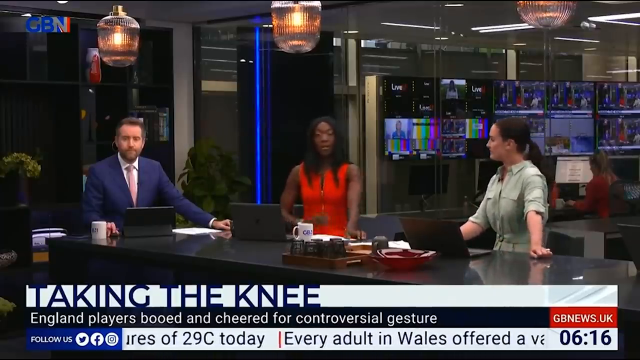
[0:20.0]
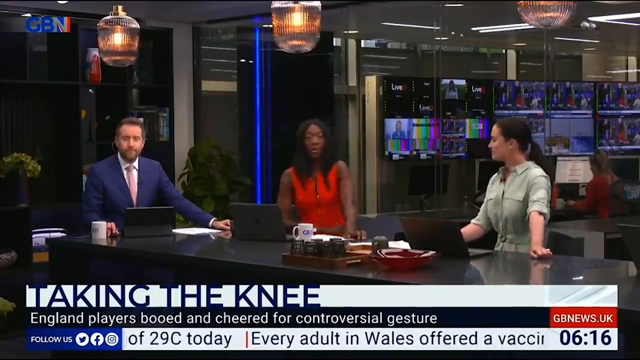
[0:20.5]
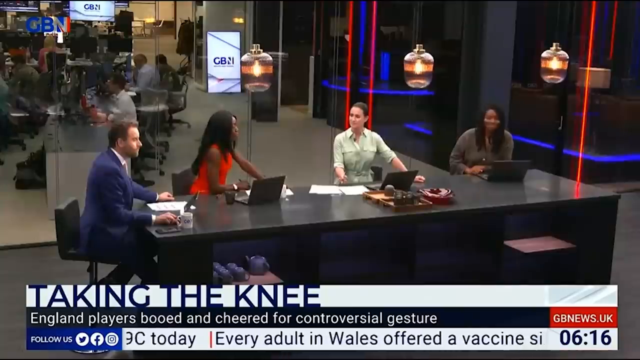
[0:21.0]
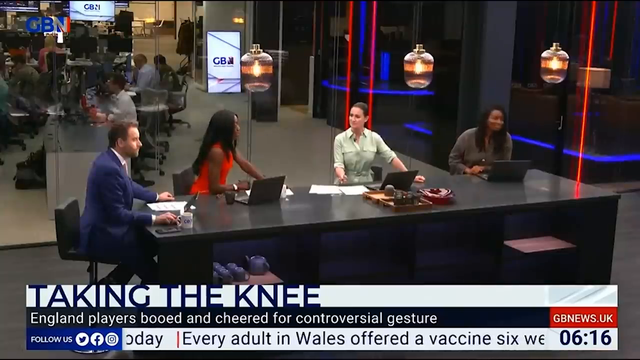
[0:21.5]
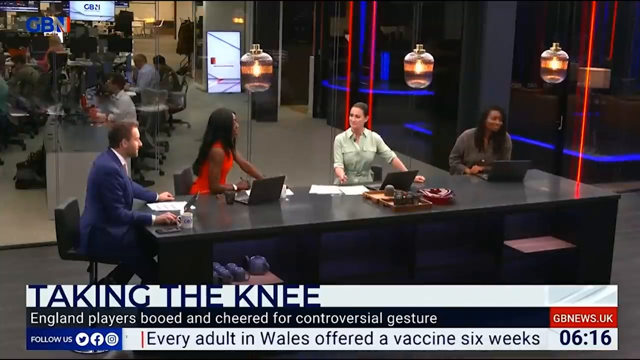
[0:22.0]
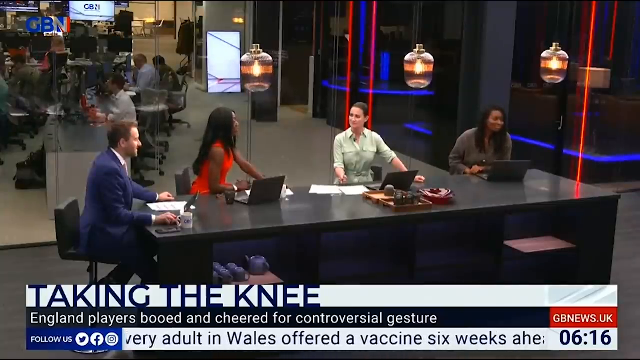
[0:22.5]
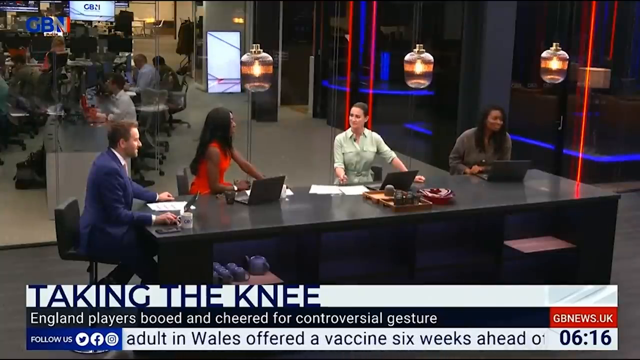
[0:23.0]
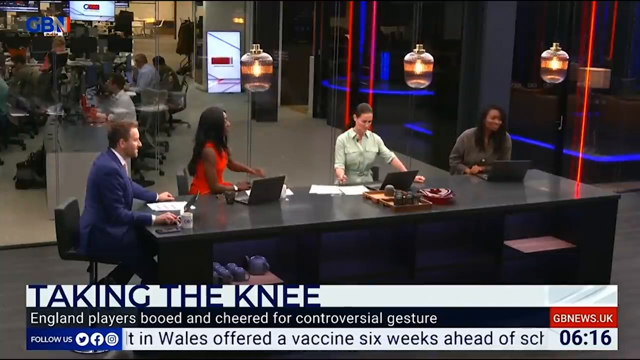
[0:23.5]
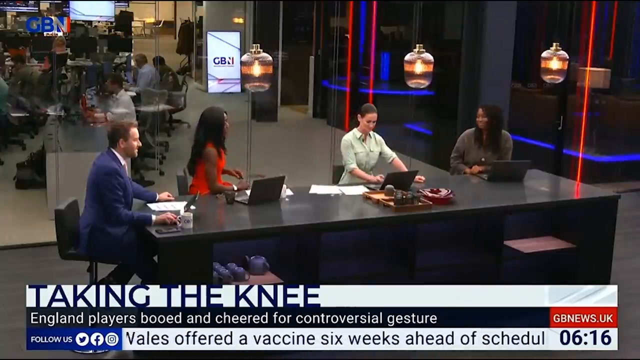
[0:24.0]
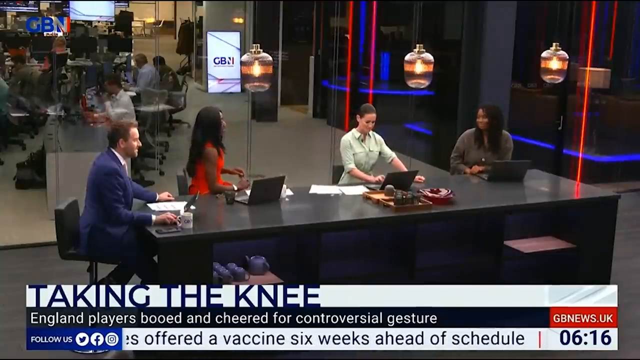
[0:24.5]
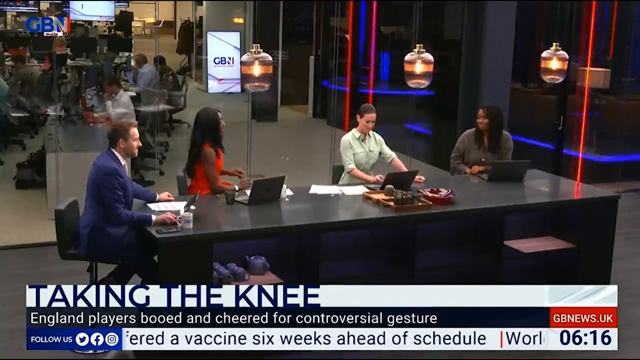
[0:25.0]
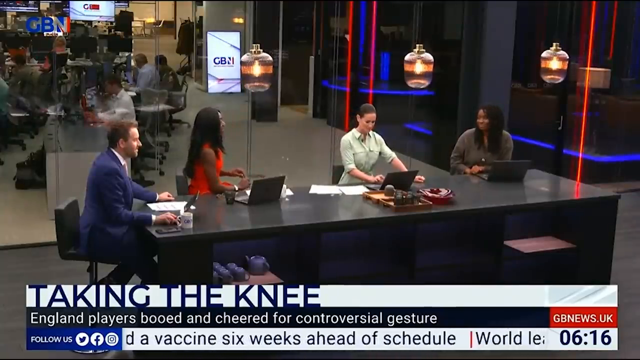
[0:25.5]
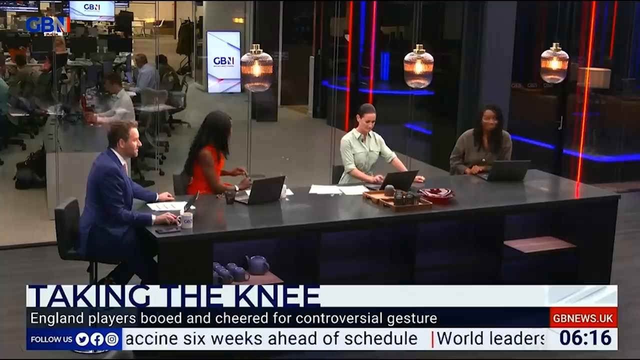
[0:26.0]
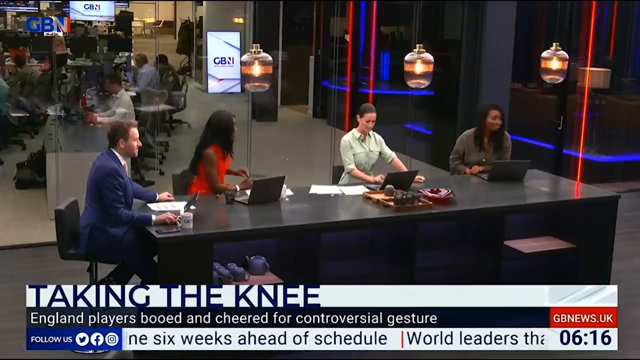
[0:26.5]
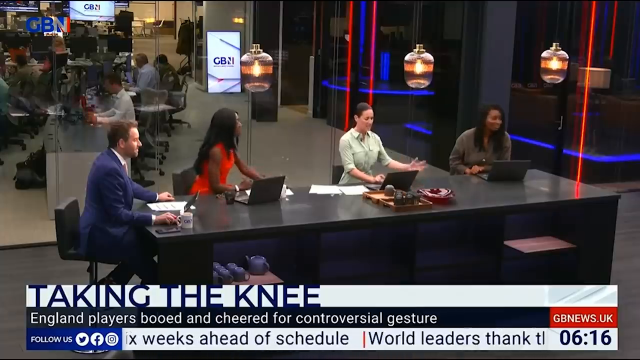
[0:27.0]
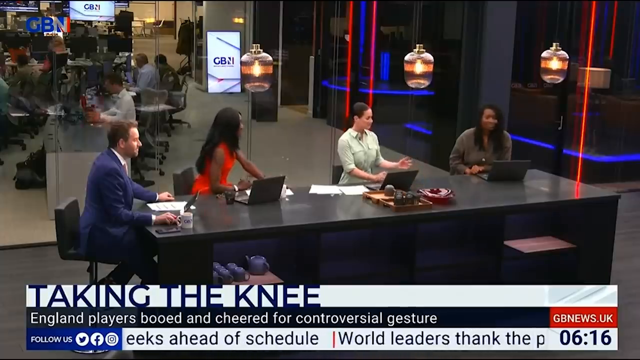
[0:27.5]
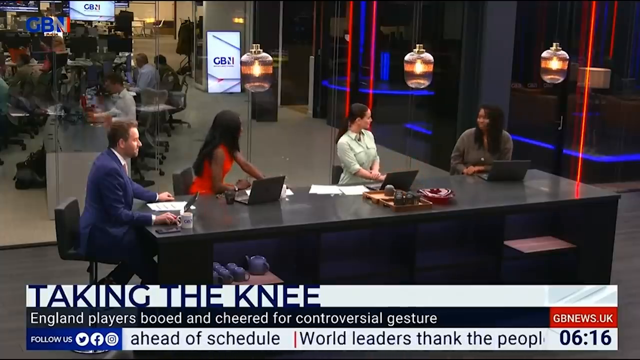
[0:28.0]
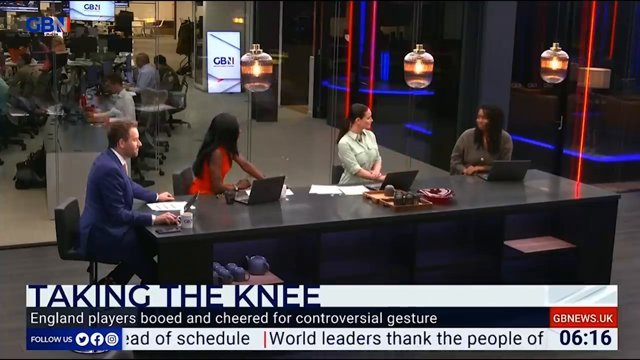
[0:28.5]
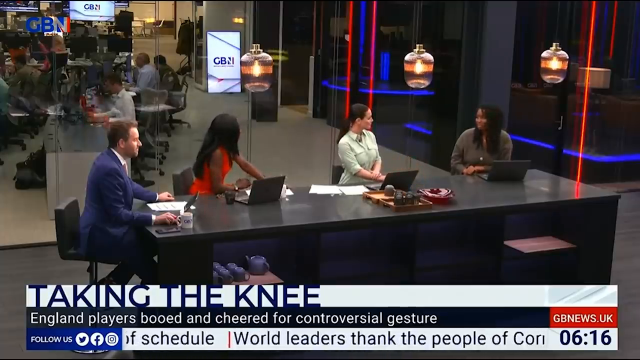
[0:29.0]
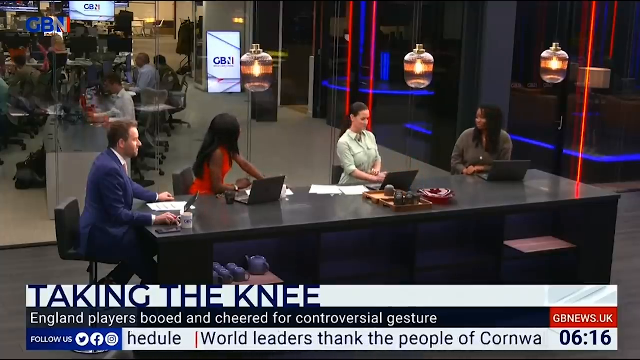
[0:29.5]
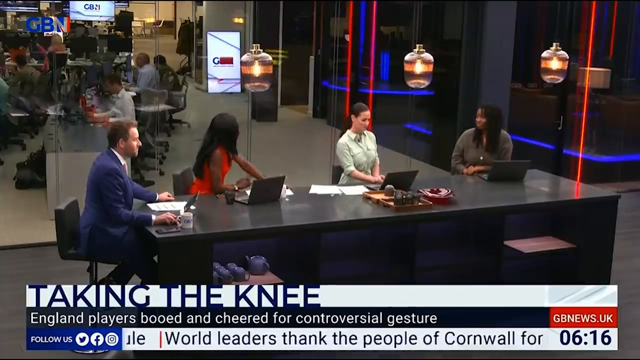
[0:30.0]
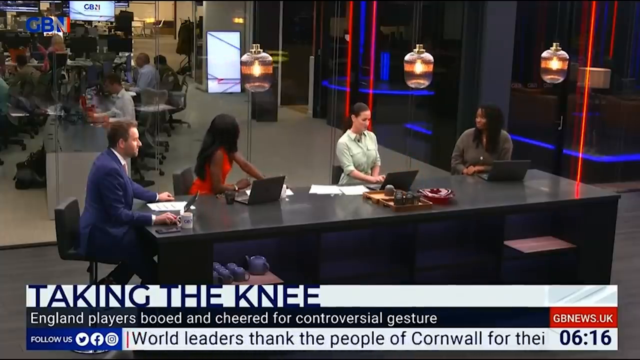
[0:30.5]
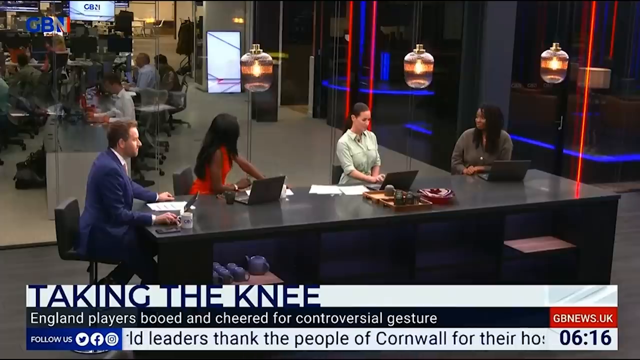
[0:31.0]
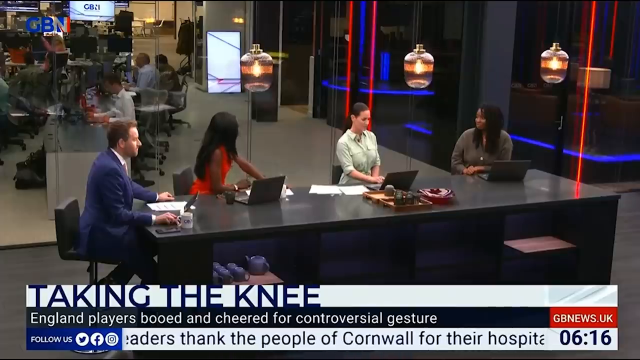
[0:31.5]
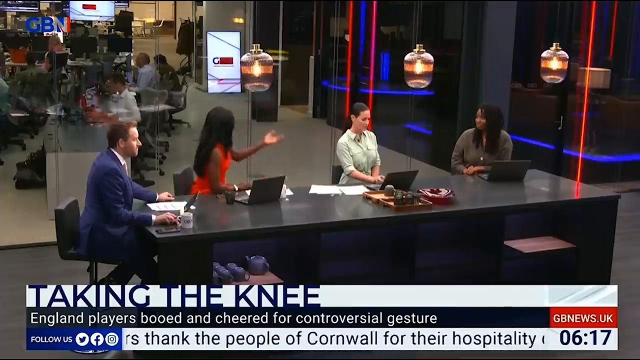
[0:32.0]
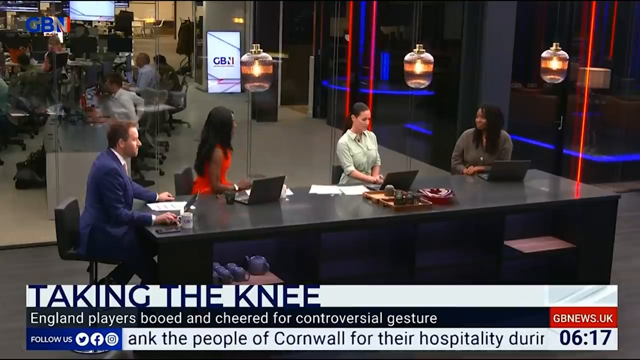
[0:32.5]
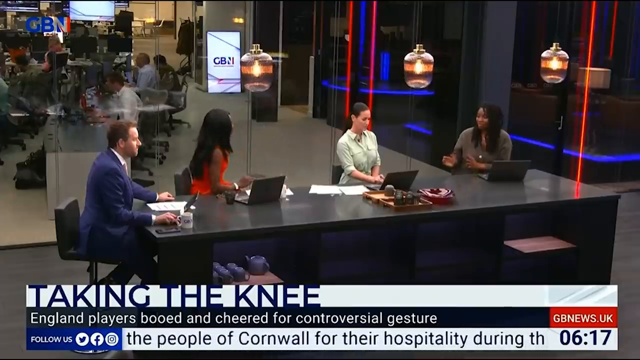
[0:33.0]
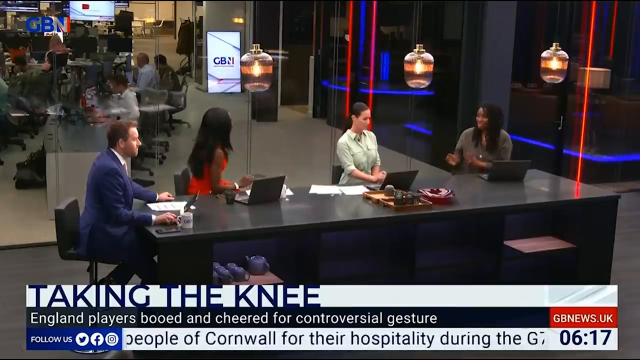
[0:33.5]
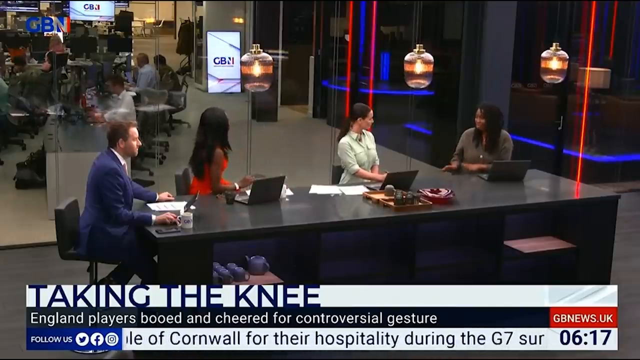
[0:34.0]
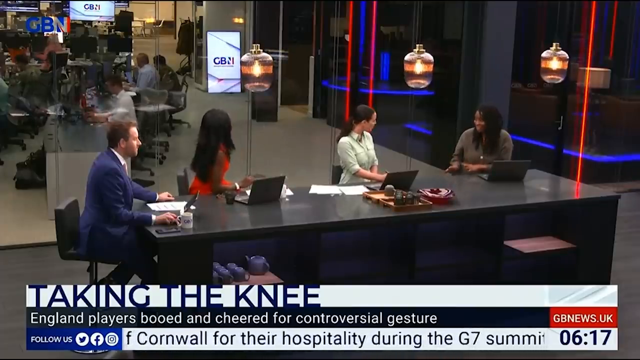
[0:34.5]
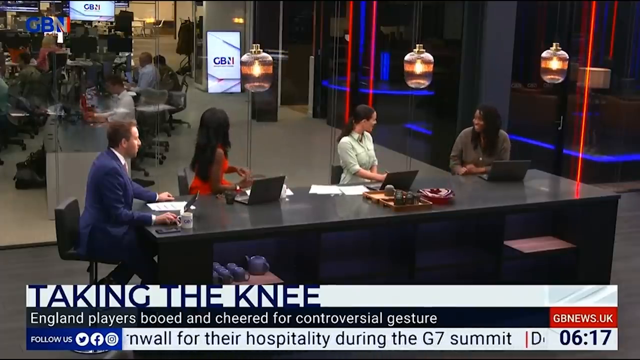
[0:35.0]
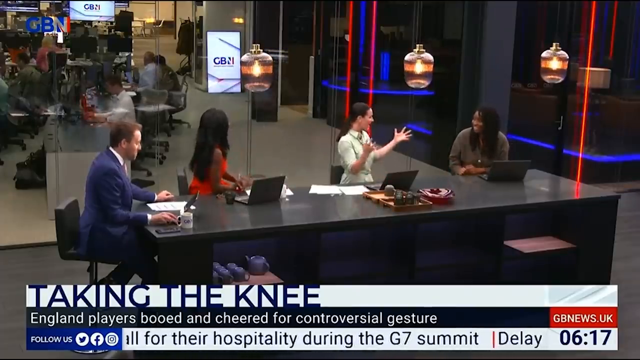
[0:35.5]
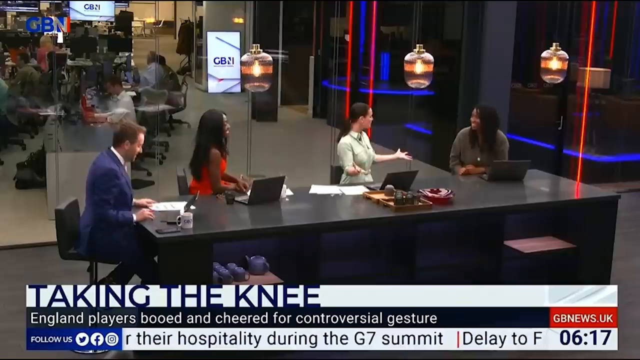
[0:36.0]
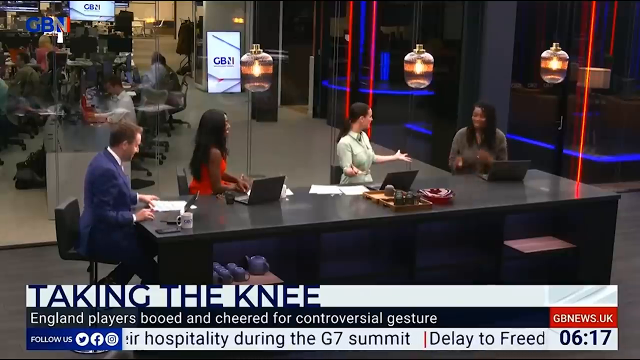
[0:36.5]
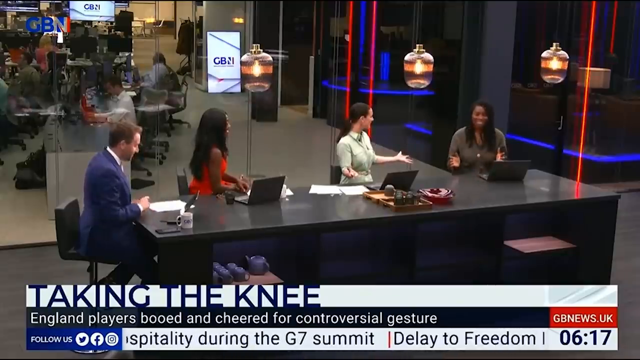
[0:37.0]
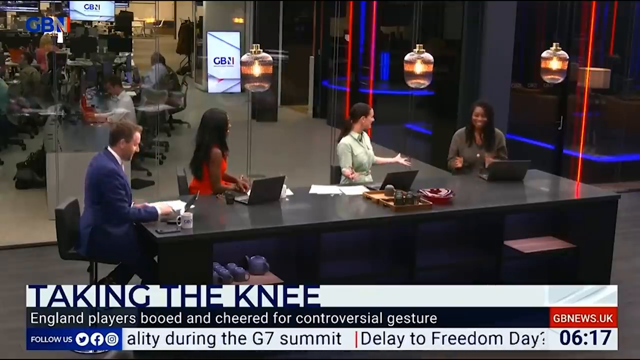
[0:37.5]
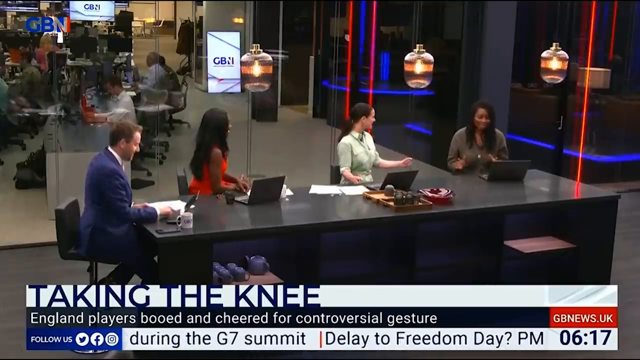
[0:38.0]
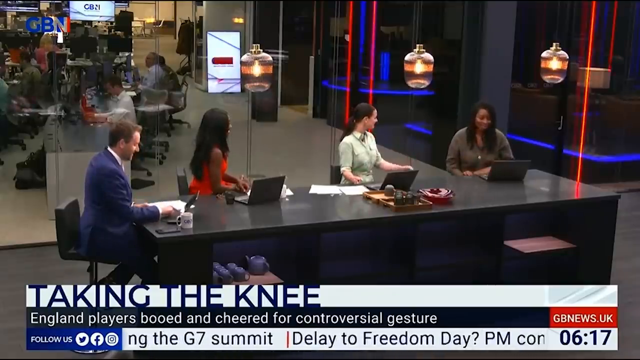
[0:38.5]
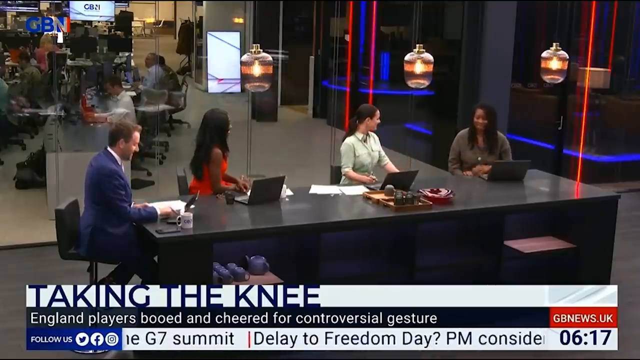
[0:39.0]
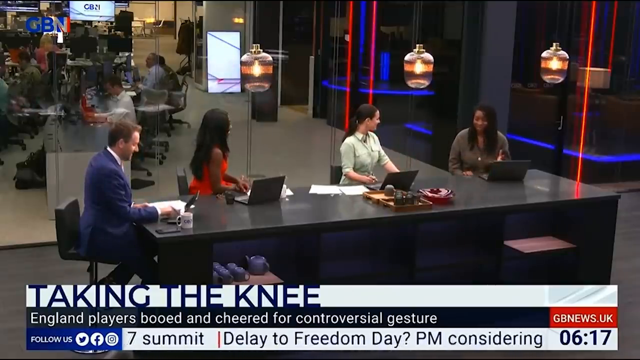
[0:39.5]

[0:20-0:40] Three people sit at the desk, among them someone in a blue suit, a black woman in a red dress, and a woman in a teal dress. The background is a beige room with lots of TV screens. The woman in the red dress has her left hand out on the desk in front of her and her right forearm on the desk. The view switches, and a fourth person is now visible on the right side of the screen: another black woman, in a brown long-sleeve shirt, with her left forearm on the desk, sort of facing forwards. The woman in the red dress talks while looking toward the right side of the screen and begins to fiddle with the pen in her right hand. The woman in the teal dress kind of looks over at the woman in brown, who talks and nods her head. The woman in the red dress talks and holds her left hand up. The woman in brown holds her hands up without removing her forearm from the desk, faces her palms together, then holds her palms face down. The woman in the teal dress holds her hands out wide, palms facing the top of the screen and fingers extended, and they continue to talk.